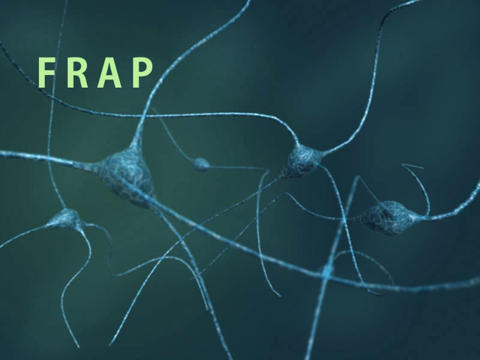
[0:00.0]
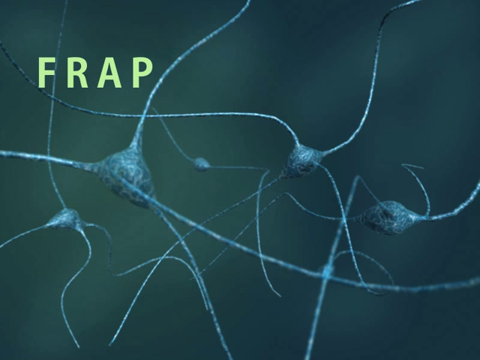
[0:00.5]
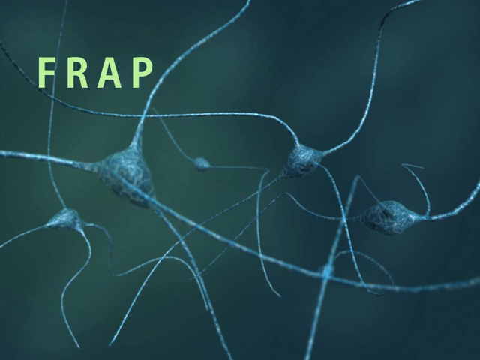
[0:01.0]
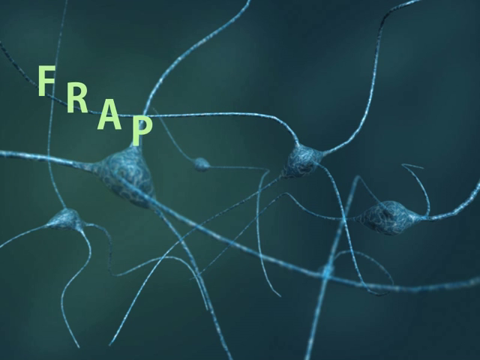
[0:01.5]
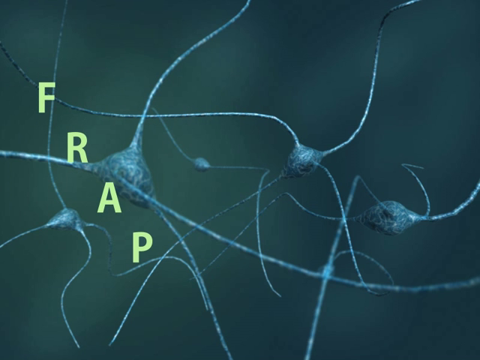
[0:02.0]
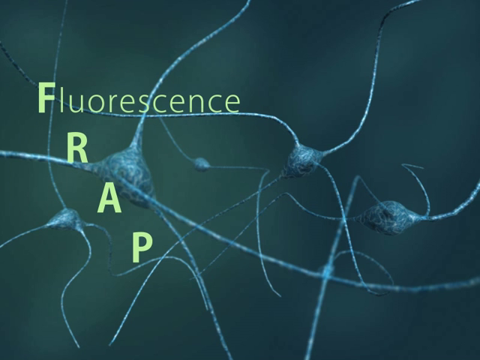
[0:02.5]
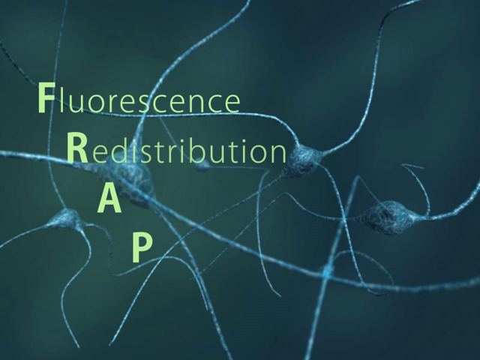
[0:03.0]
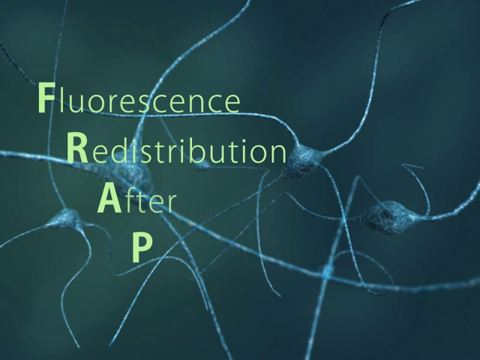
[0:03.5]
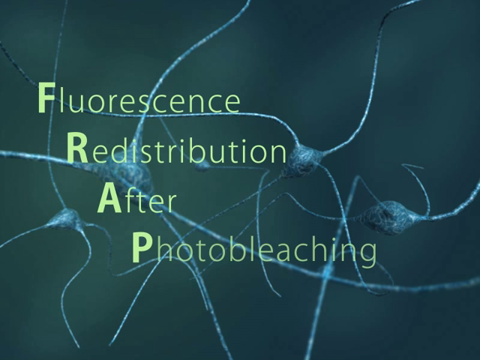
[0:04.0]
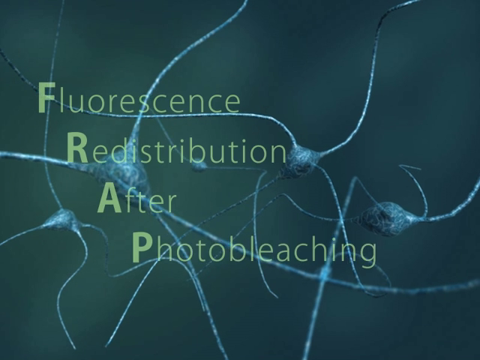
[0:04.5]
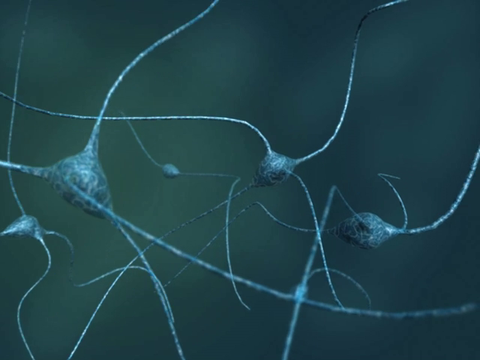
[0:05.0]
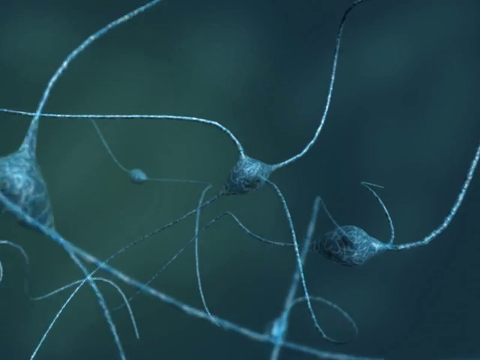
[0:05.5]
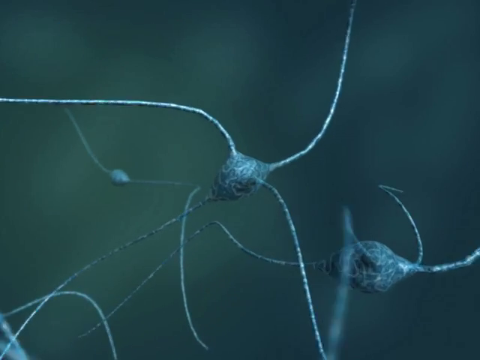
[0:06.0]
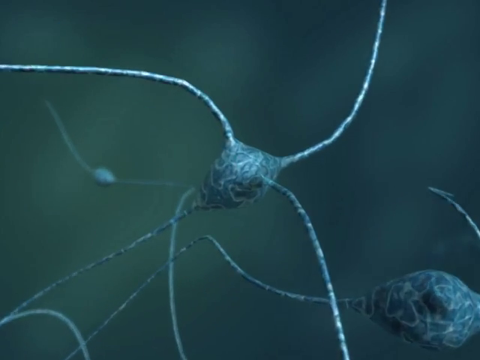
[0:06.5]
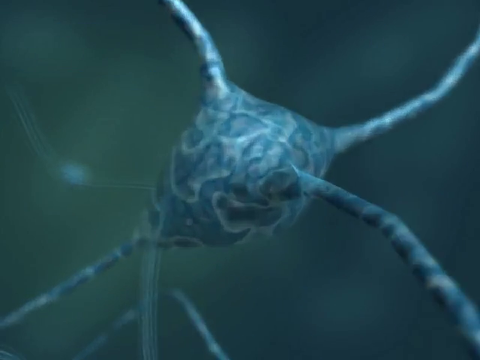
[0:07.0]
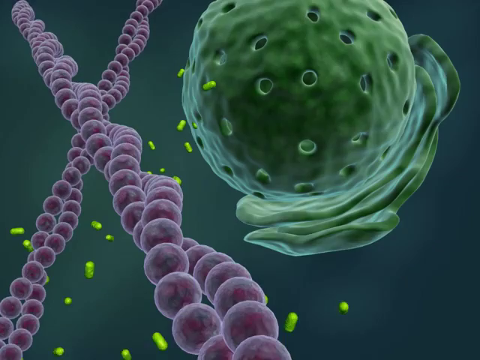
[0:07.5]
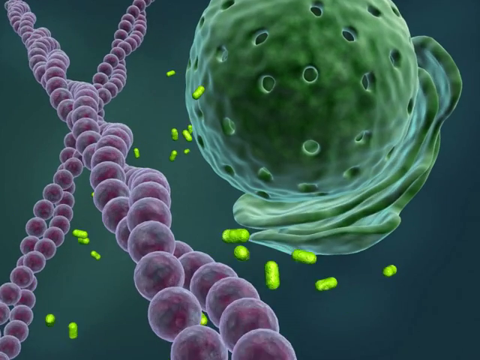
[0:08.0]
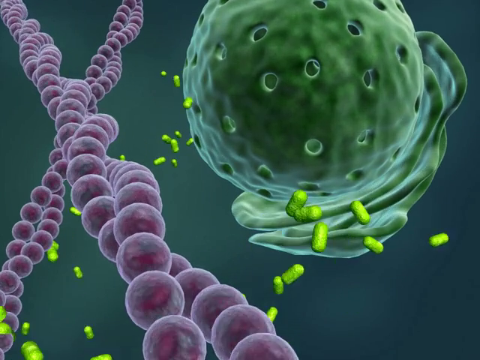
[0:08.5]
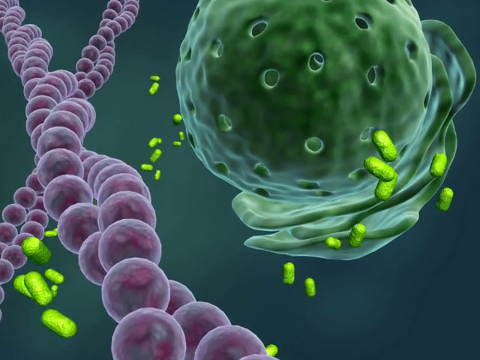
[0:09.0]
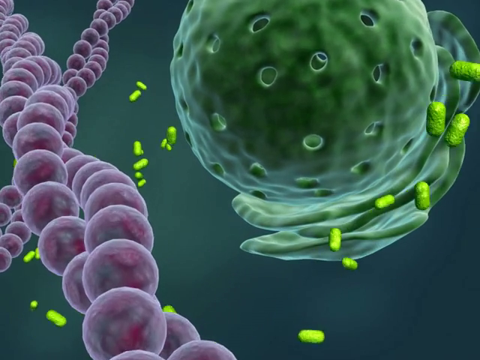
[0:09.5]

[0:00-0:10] The video opens on the subject "FRAP." The opening shot shows five cellular structures with stems sticking out on all sides. The video spells out what FRAP stands for: "Fluorescent Redistribution After Photo Bleaching." The subject appears to be microbiology, and the view zooms in further. The graphics are easy to read, with the text in the background being a dark color. The camera moves a little fast, especially while the meaning of FRAP is spelled out, and it shows different moving parts in greater detail.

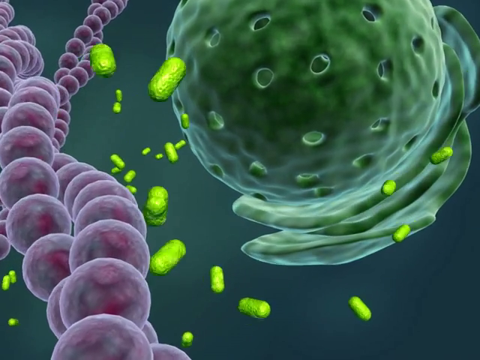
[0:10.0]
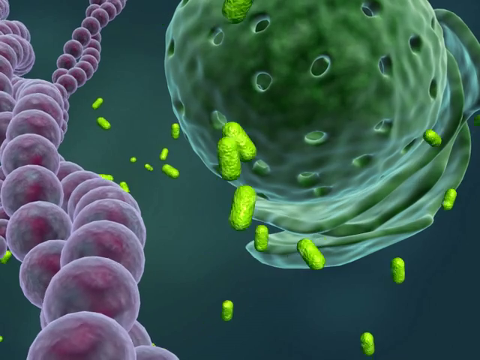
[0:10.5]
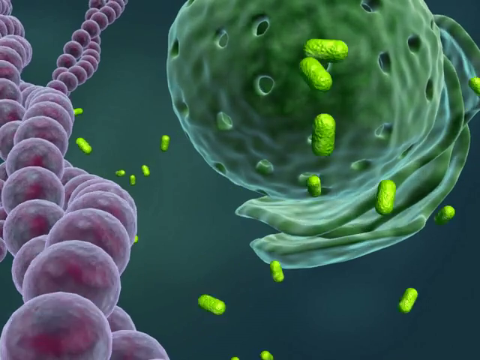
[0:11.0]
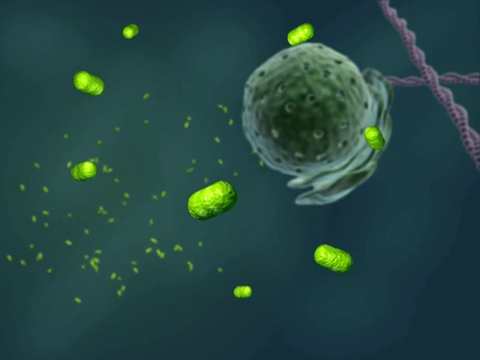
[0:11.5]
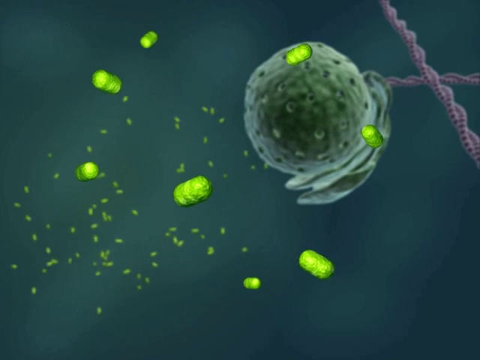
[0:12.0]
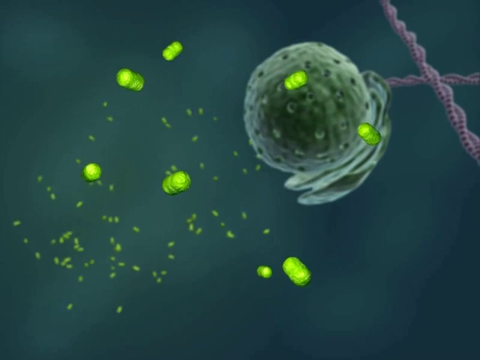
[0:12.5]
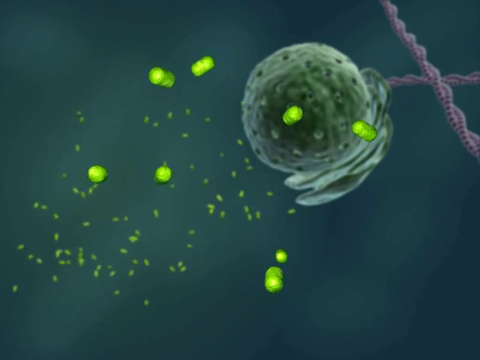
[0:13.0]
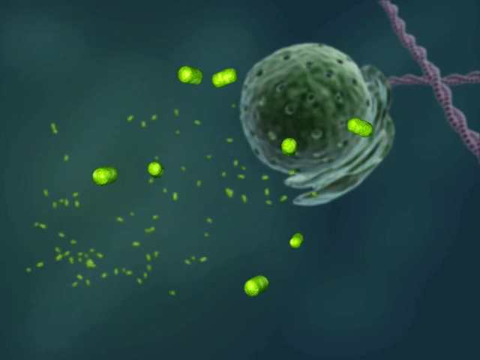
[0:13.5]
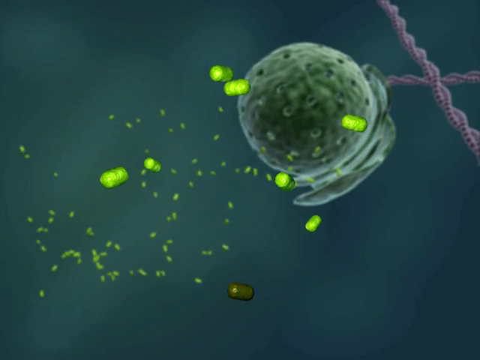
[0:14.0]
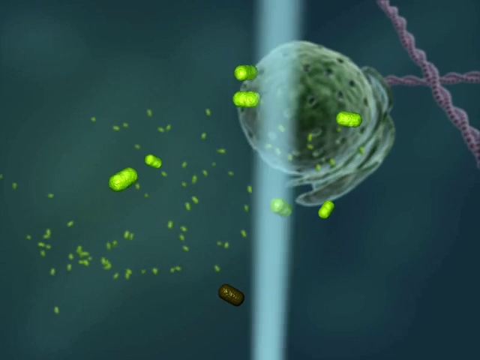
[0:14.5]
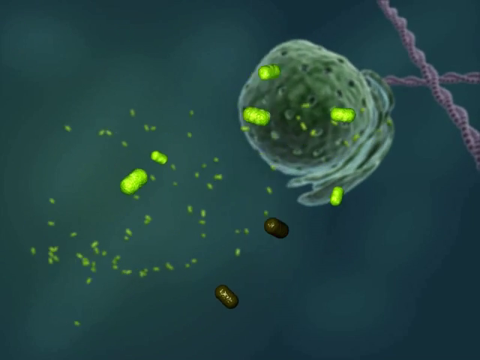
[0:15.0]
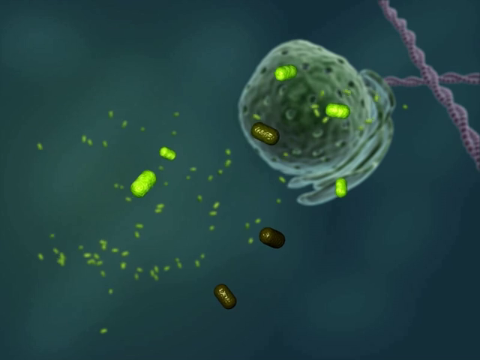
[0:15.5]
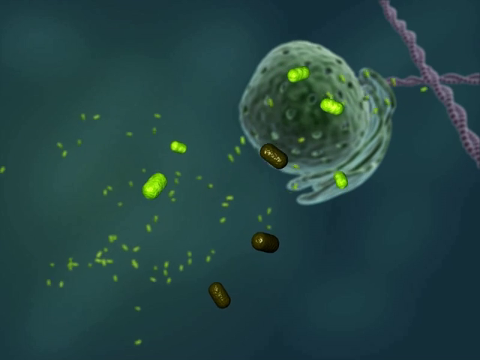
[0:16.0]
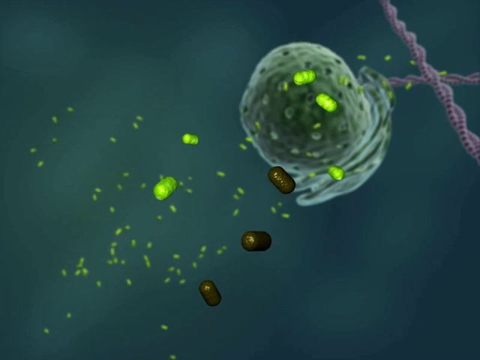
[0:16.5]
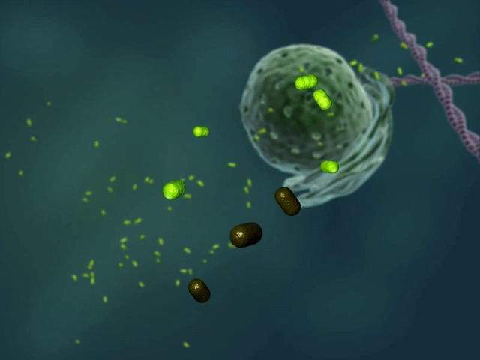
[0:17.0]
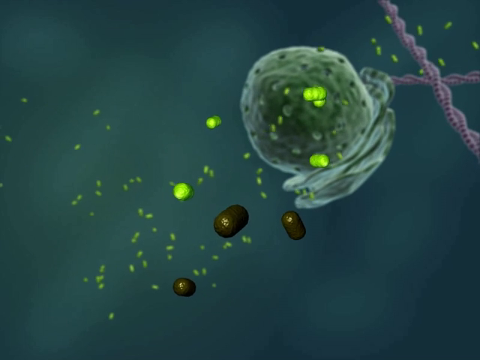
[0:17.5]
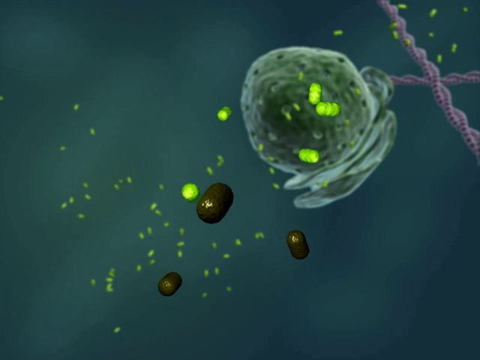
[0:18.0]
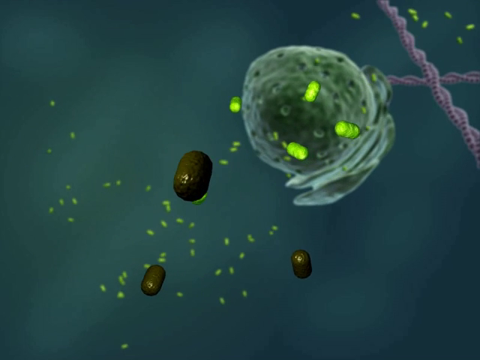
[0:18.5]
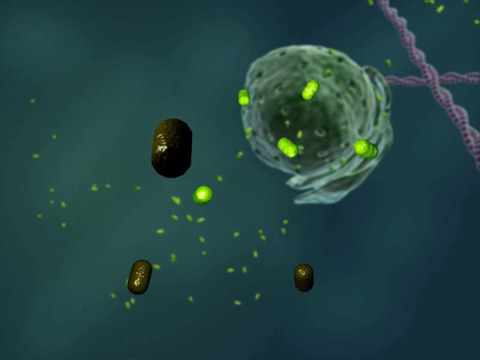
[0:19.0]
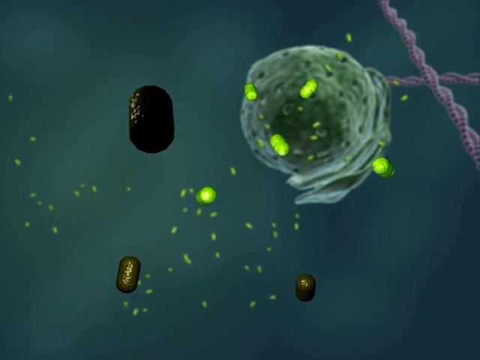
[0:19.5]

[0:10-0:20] A zoomed-in view of the cellular structure shows different shades of green, from very light green to dark green, all in motion, along with one purple strand. The movement is fluid, with the structures oscillating. Tiny fragments of an even lighter green substance are also present, so there are many moving parts. The graphics move quickly from scene to scene.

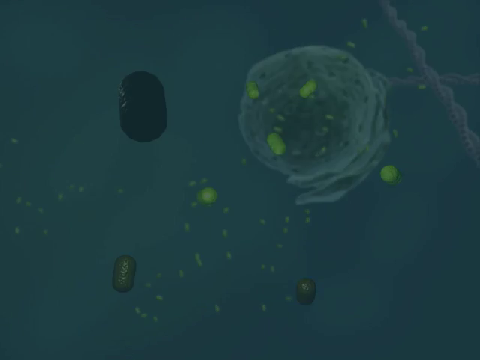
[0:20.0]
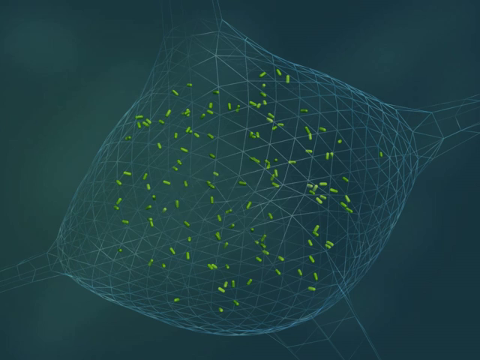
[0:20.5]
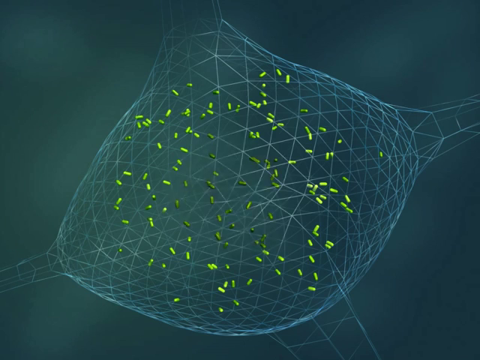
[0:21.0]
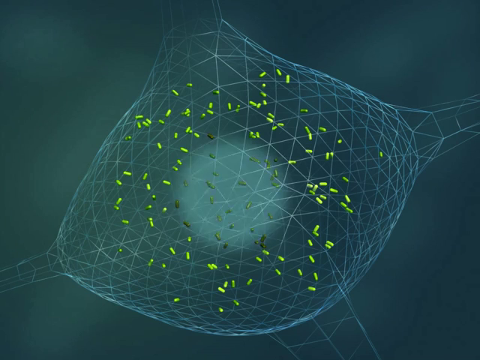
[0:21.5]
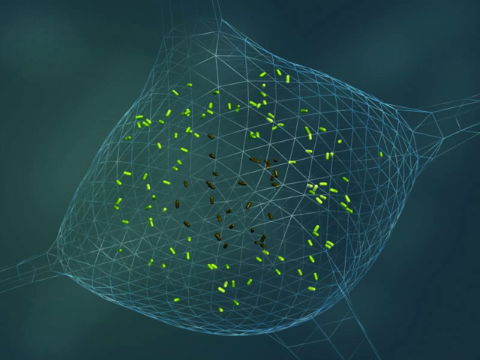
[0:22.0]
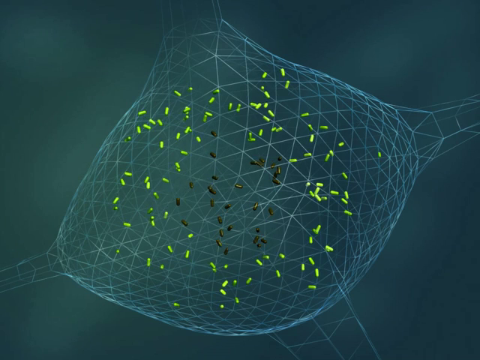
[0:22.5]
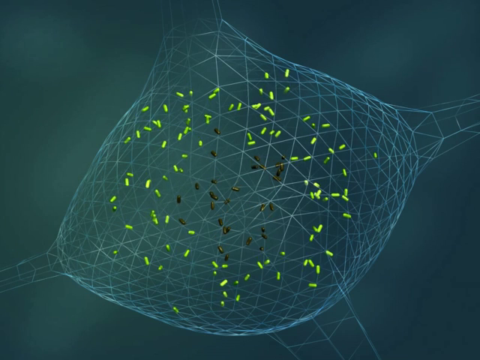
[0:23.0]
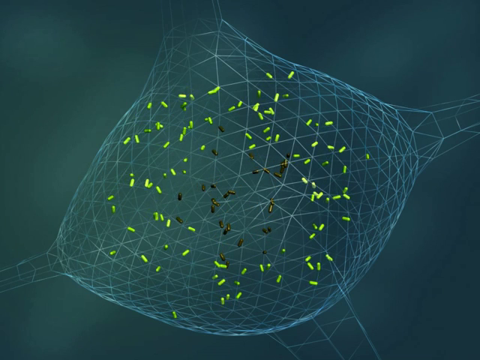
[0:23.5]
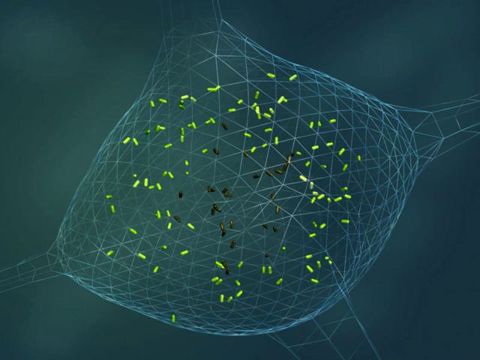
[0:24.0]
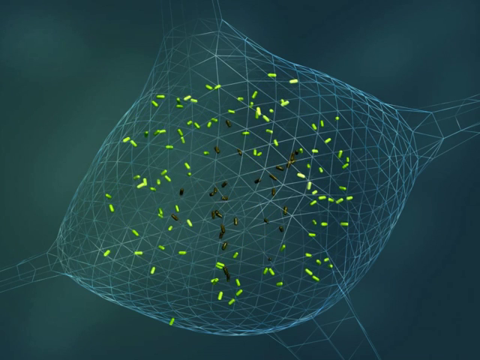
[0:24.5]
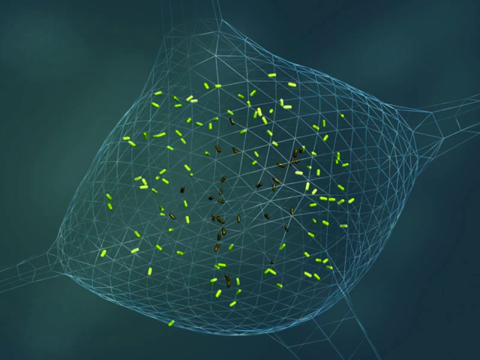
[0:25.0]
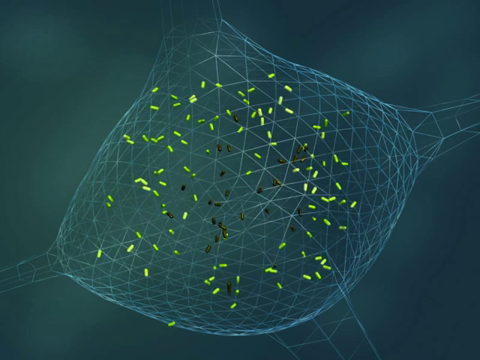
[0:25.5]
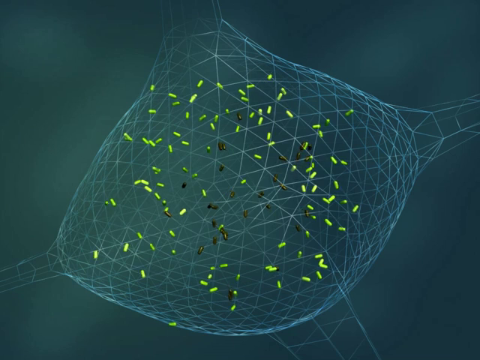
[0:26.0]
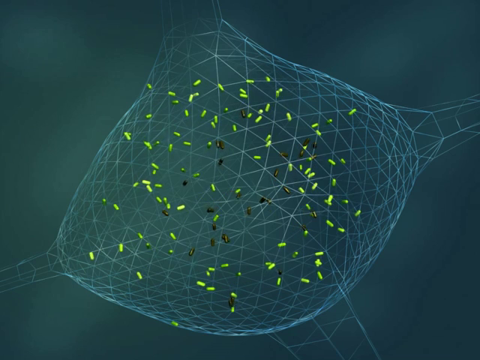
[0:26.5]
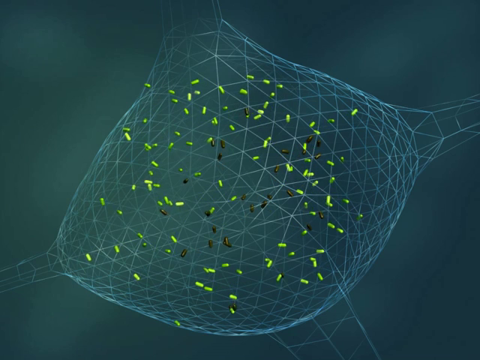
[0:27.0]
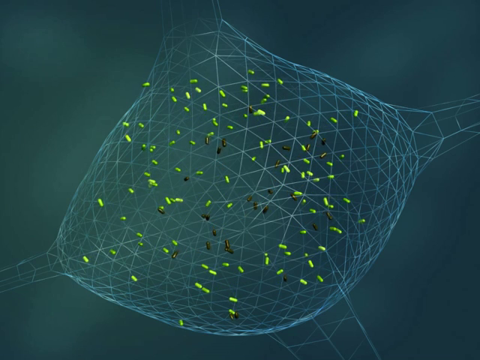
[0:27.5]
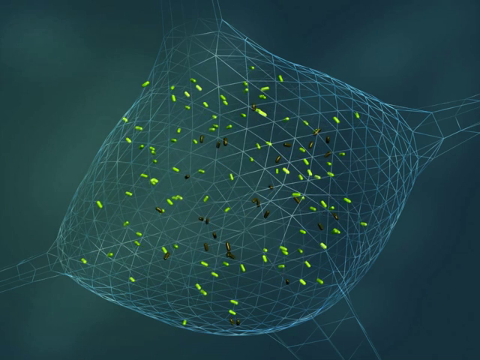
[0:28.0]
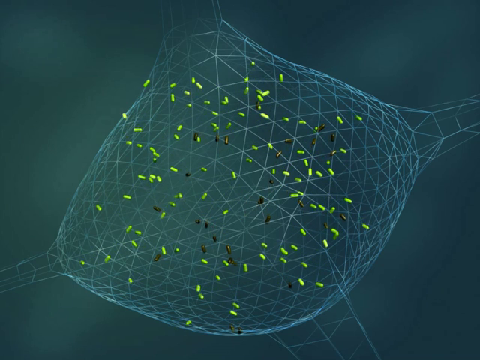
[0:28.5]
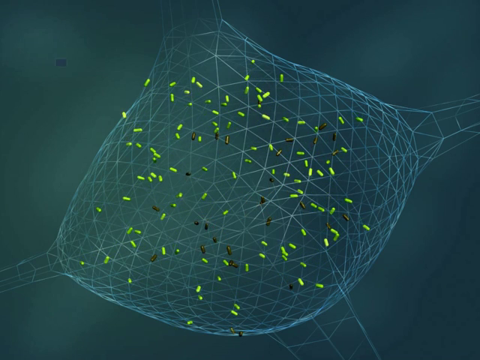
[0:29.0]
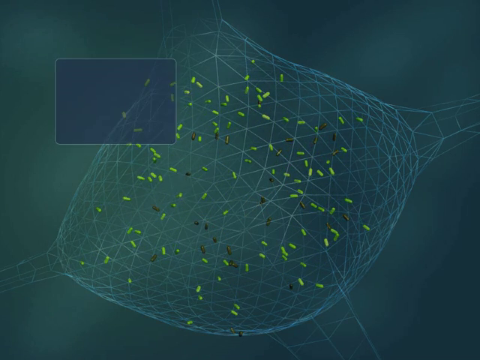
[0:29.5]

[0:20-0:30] The view goes deeper inside the cellular structure, with the different green figures moving, and goes even further in at the end. The fluid movement within the structure is highlighted: the parts move in sync with each other in different directions. The pill-shaped features come in different shades of green, and there are probably around 50 or more moving parts inside the structure, though it is hard to tell. A spotlight appears in the center of the structure.